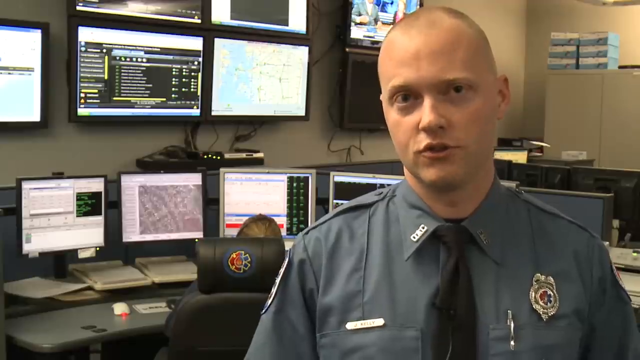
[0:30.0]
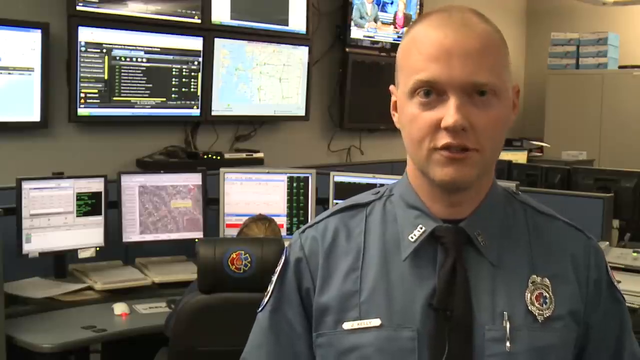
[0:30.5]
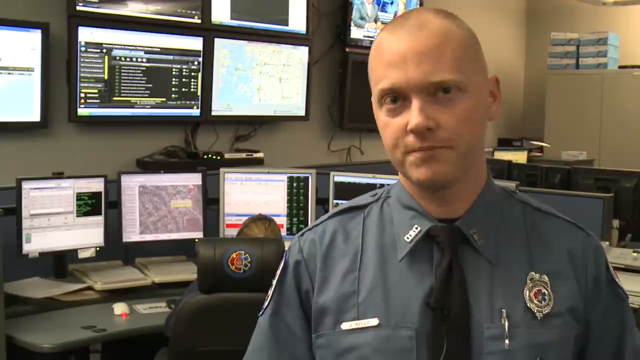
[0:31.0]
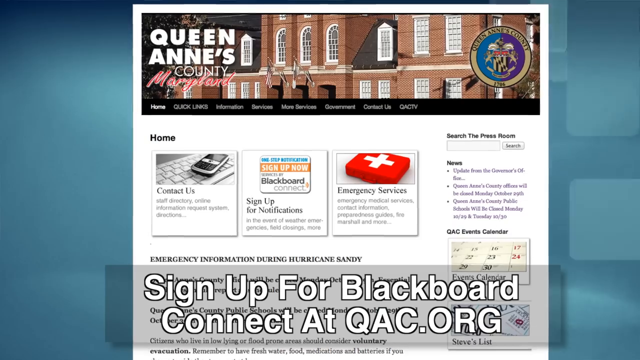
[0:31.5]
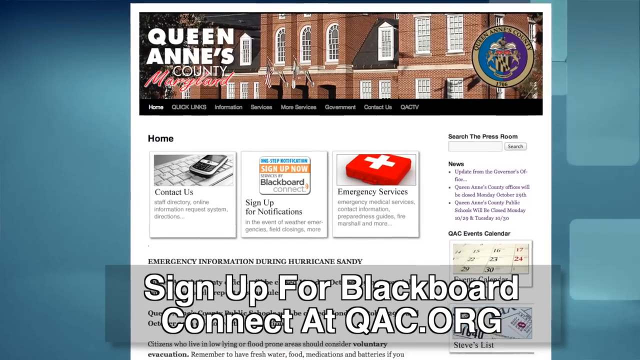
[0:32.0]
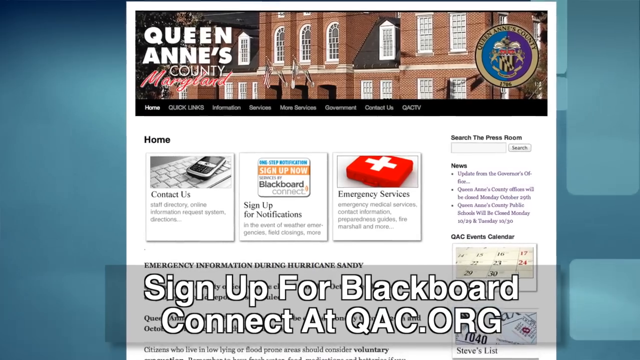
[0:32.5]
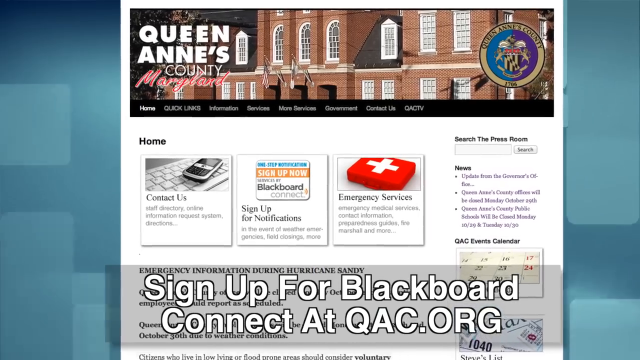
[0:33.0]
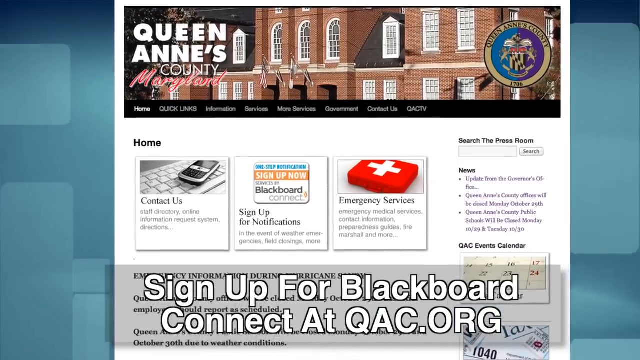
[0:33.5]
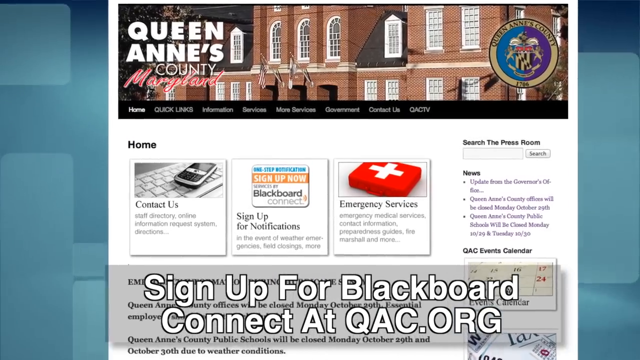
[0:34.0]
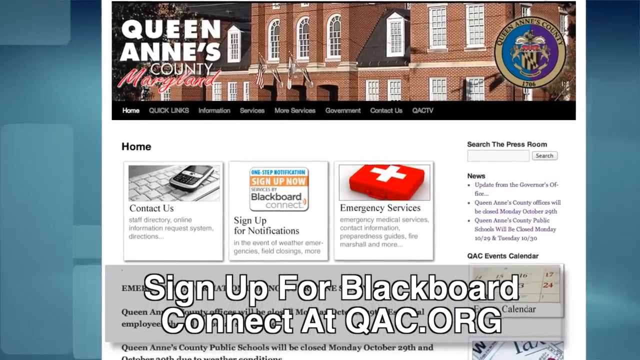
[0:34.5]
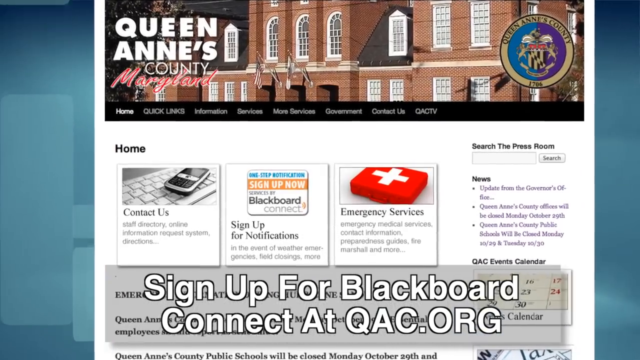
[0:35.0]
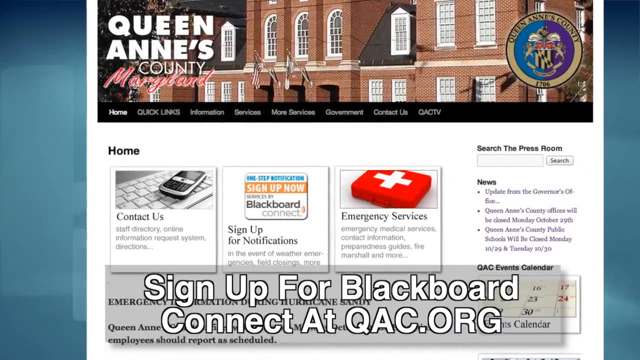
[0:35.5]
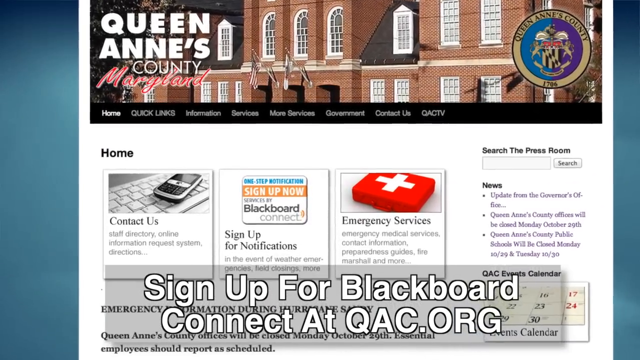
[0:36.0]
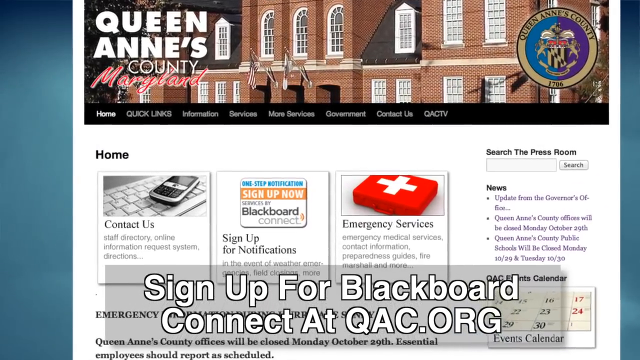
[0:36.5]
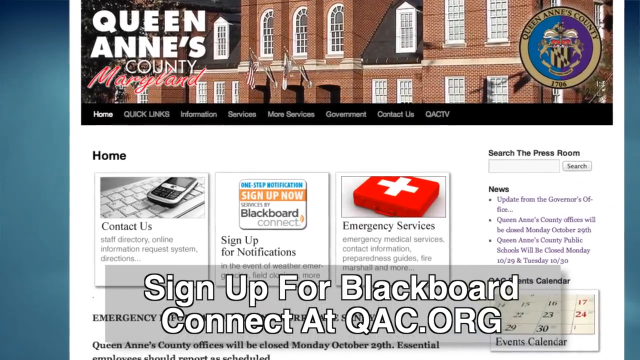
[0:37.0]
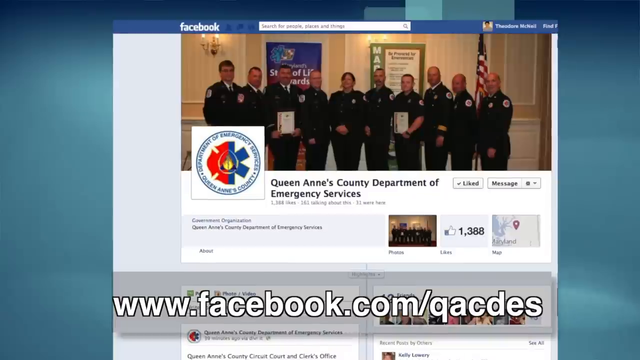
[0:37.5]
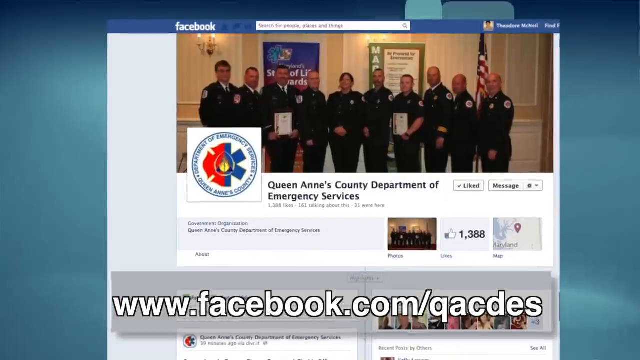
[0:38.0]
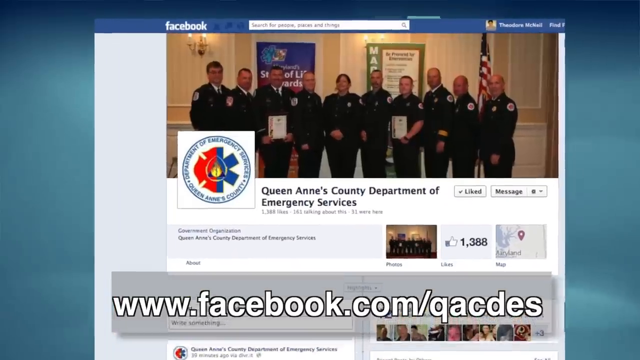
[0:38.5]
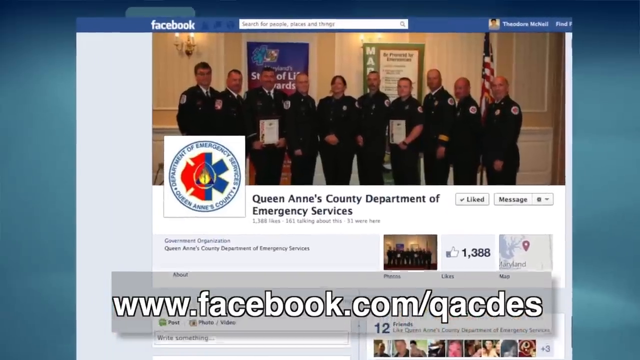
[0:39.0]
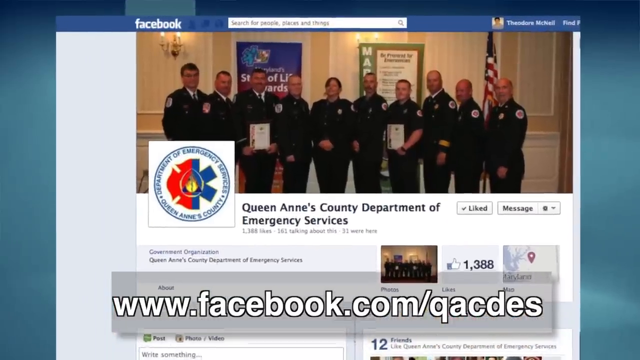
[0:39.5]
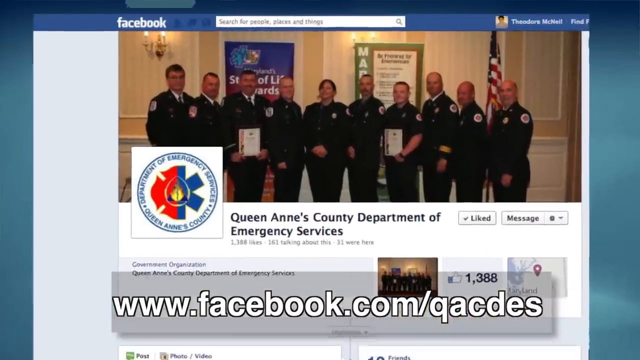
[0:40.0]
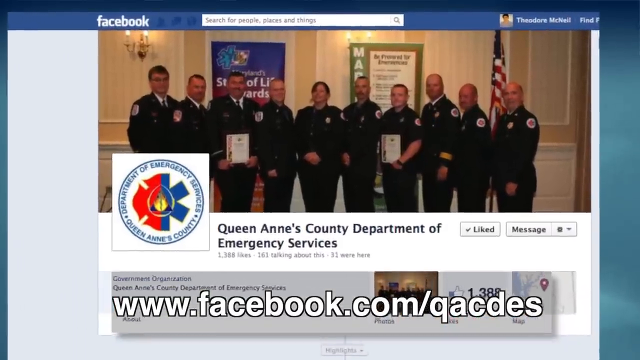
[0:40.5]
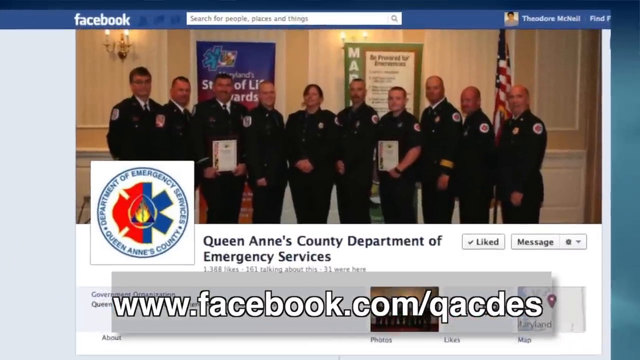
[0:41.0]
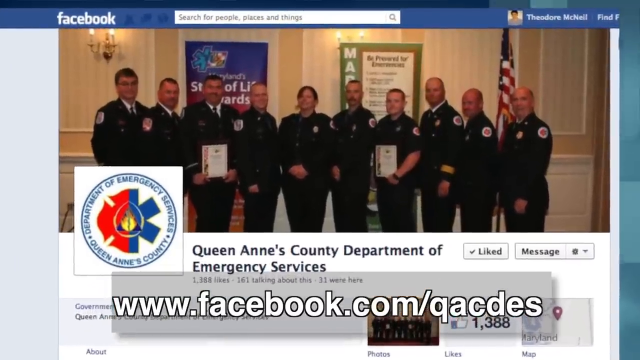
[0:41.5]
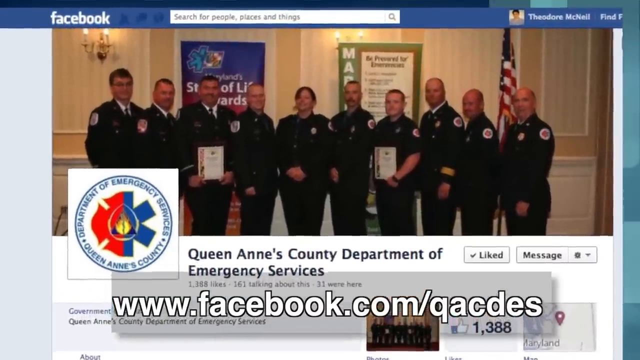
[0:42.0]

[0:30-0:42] Officer Kelly speaks from the control room of the Queen Anne County Emergency Services, giving a public service announcement about a potential emergency. In the background, agents man the phones with monitors in front of them, and there are news screens, apparently for following emergencies or the news while they listen for emergency calls. The screen then changes to the website of Queen Anne County, Maryland, showing the home page with "contact us", "sign up notifications" and "emergency services", along with emergency information during Hurricane Sandy. White text at the bottom reads "sign up for a Blackboard Connect at QAC.org". A screen in the background shows the Queen Anne's County Department of Emergency Services Facebook page, with a photograph of senior officers in uniform standing in a row and holding framed certificates in front of them, probably for some sort of award. The Facebook address "www.facebook.com/QACDS" is given, and the page also has information on what to do in the event of a disaster.